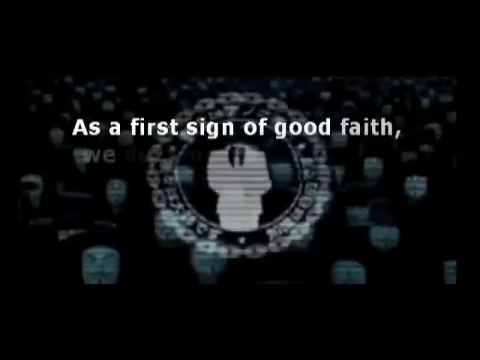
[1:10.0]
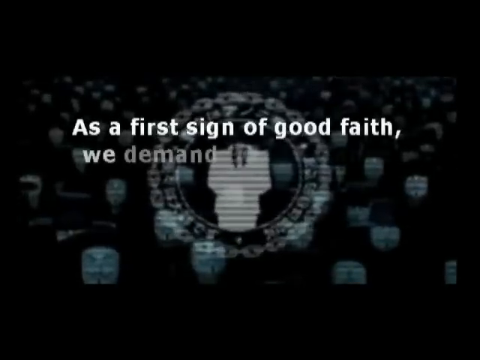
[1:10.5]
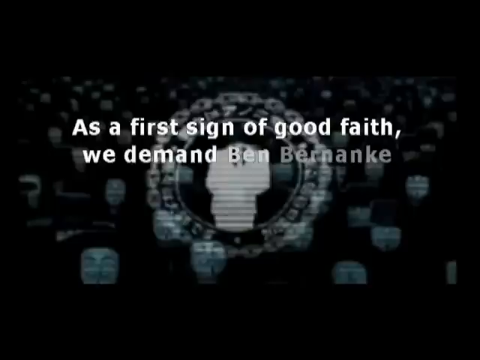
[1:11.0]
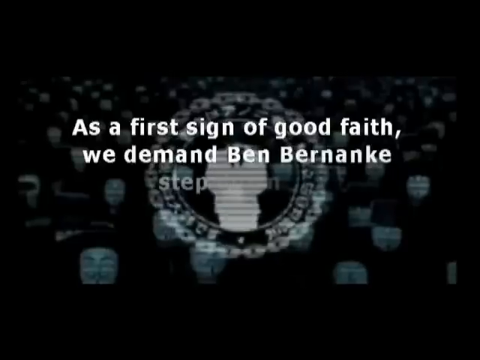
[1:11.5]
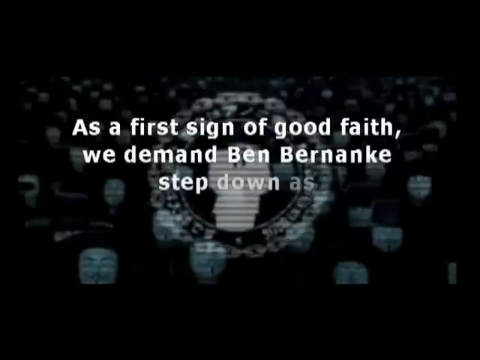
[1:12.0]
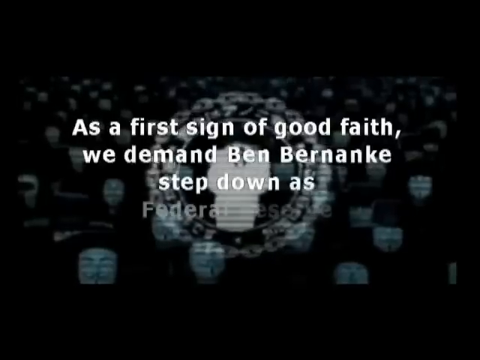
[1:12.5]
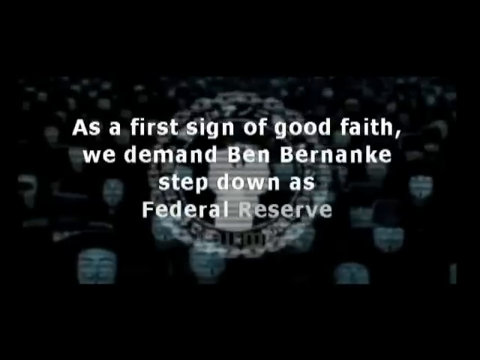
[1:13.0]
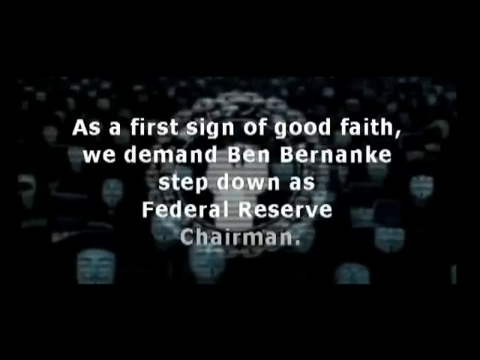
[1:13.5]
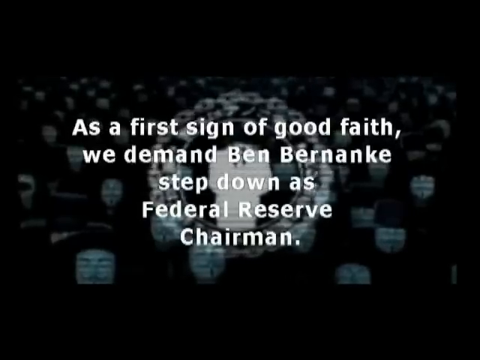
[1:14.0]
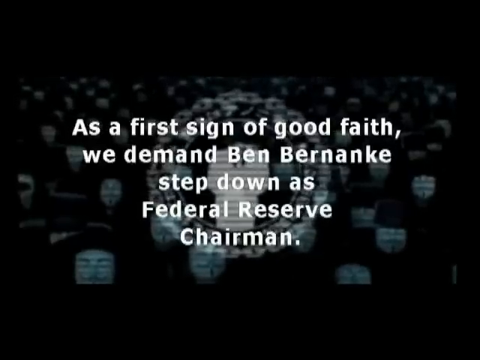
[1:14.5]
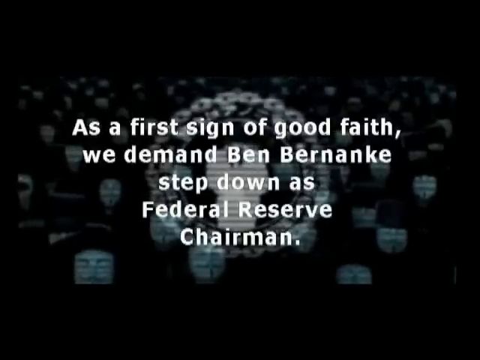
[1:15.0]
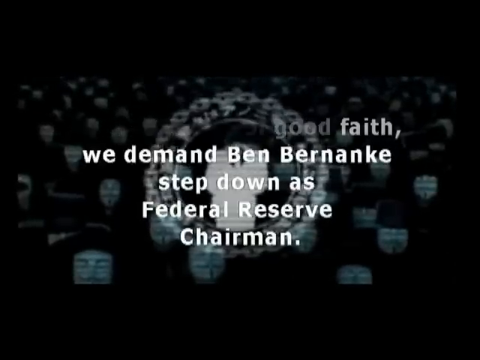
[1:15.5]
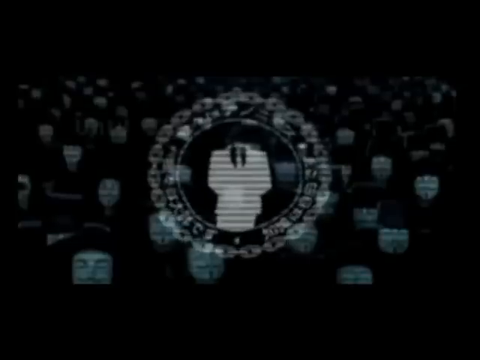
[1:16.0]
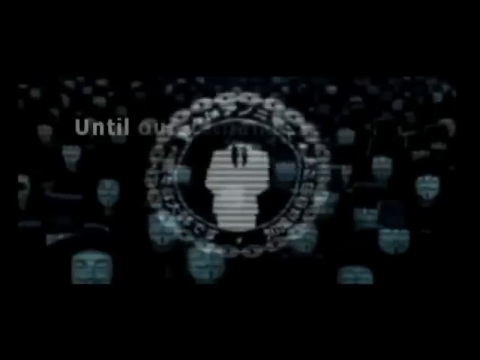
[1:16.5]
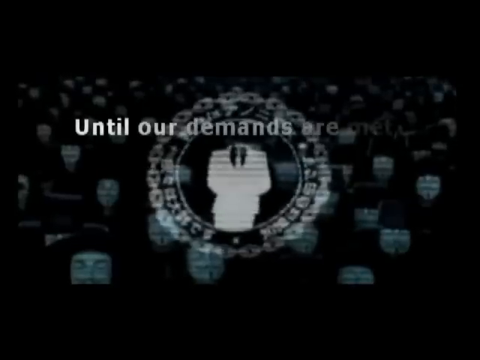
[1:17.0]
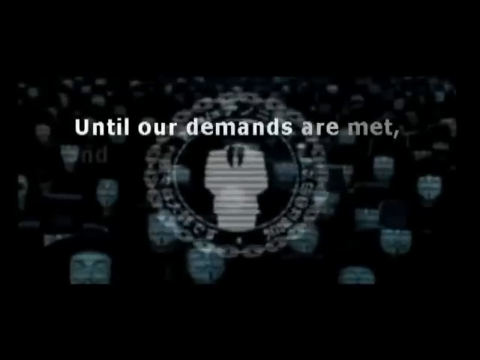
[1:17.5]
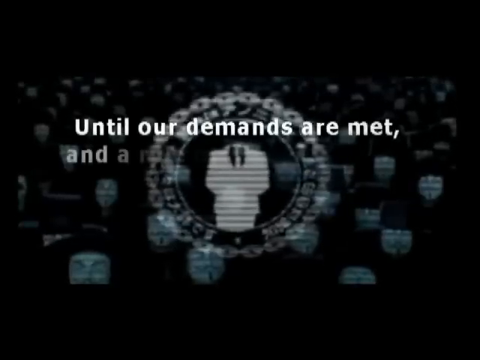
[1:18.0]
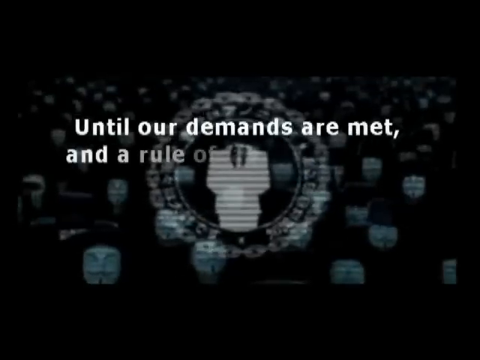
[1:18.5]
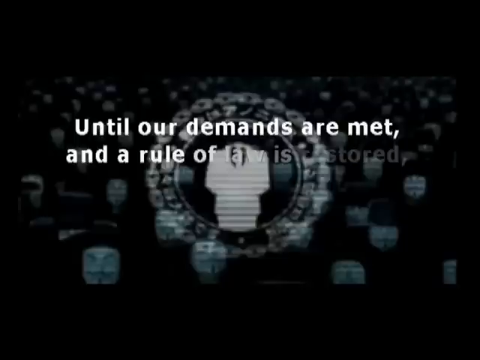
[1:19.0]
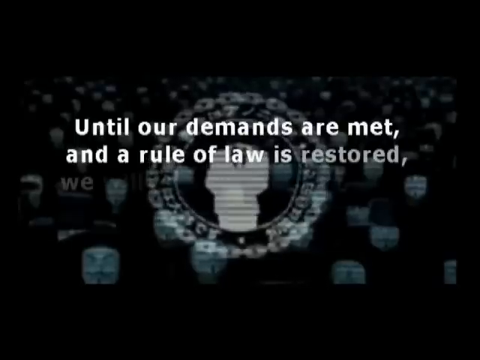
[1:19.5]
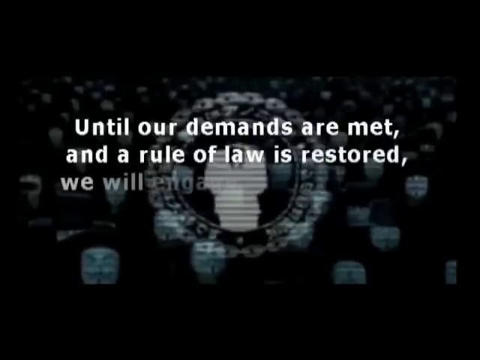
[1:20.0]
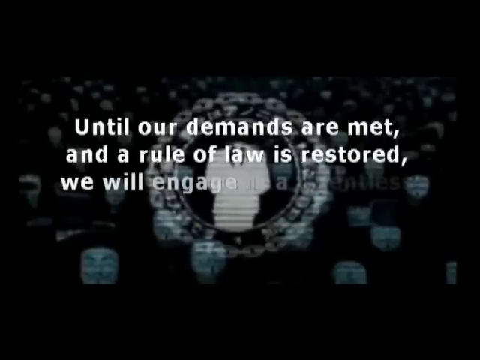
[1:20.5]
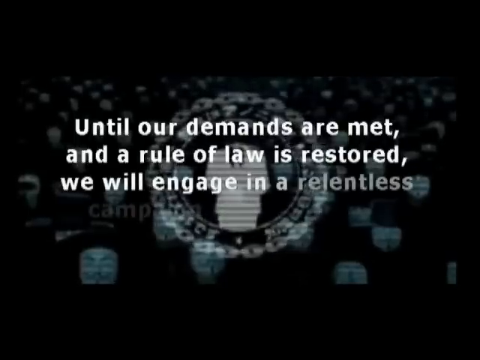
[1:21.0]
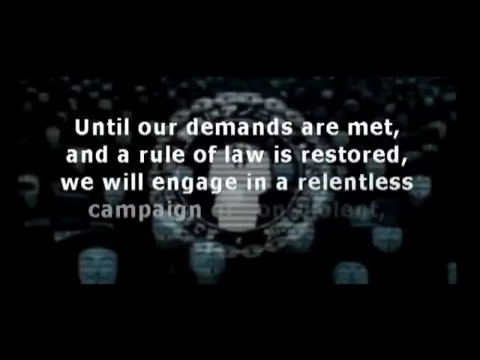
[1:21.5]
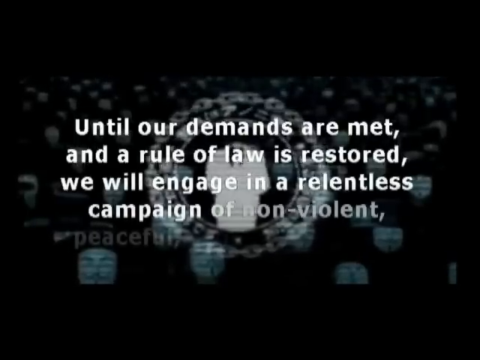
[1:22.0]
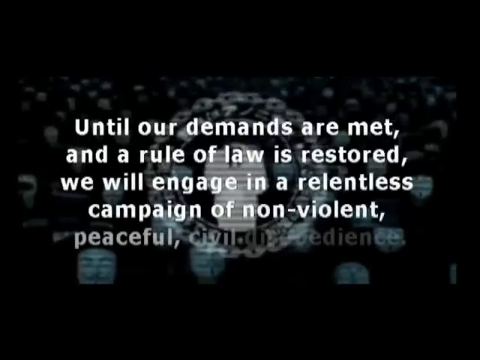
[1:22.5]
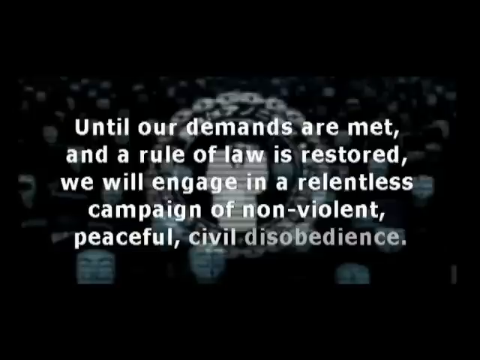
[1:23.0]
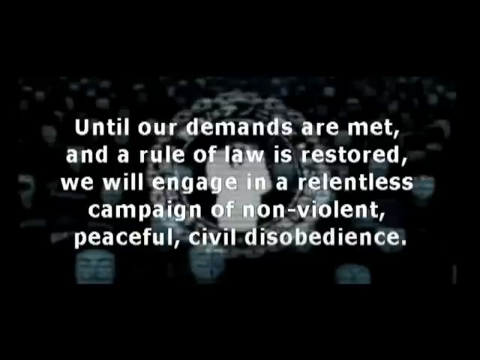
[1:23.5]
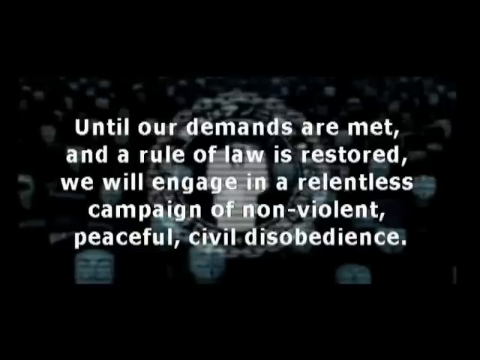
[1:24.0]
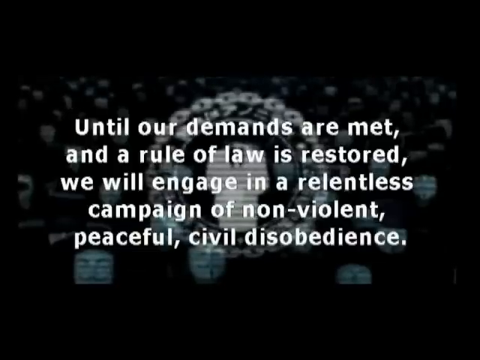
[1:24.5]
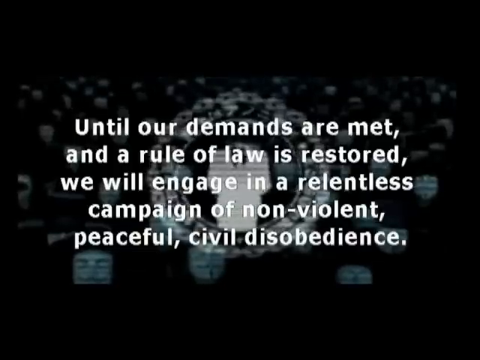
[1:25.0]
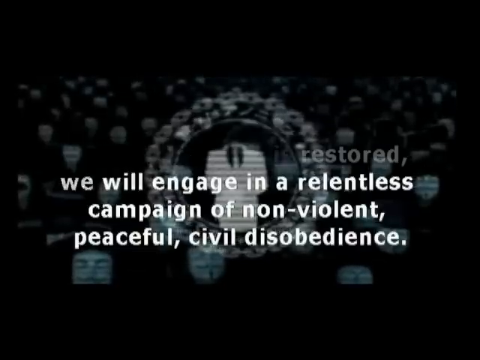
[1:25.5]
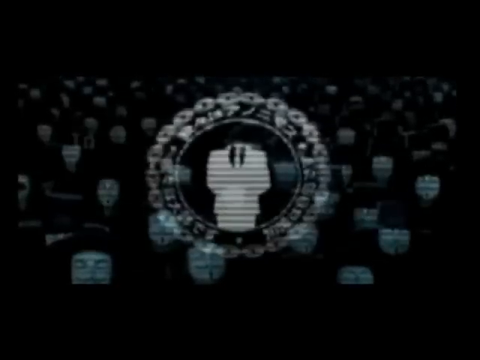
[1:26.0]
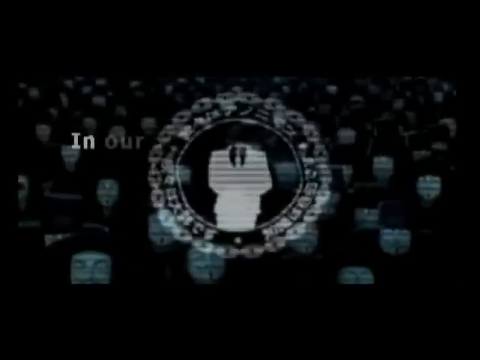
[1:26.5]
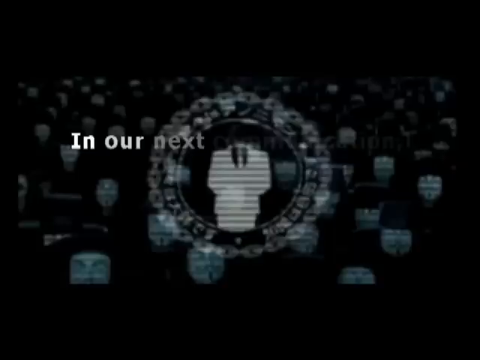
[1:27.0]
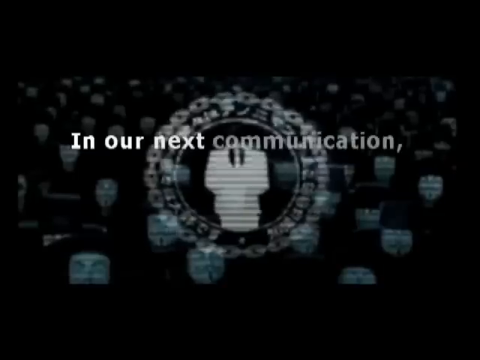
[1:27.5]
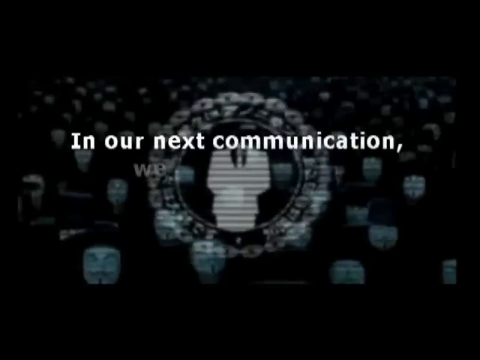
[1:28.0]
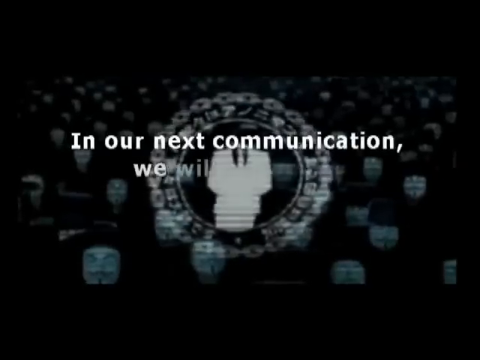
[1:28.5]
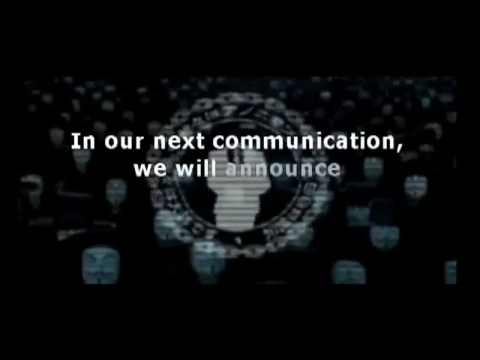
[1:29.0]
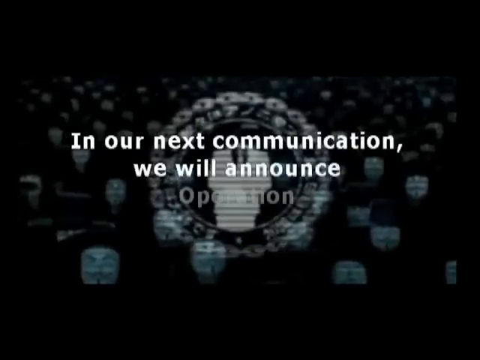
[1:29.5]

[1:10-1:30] A black background shows many figures wearing white masks and a circular logo, slightly flashing, with something inside it that looks like a person wearing a white suit. In front, white text slowly appears, reading: "As a first sign of good faith, we demand Ben Bernanke step down as Federal Reserve Chairman". After a while this text disappears and another block starts appearing in its place: "Until our demands are met and the rule of law is restored, we will engage in a relentless campaign of non-violent, peaceful, civil disobedience". The text disappears again and another sentence starts appearing, "In our next communication we will announce...", stopping in the middle of the sentence. Each time, the text appears slowly, word after word, and once fully shown it remains on screen for a few seconds so it can be easily read.